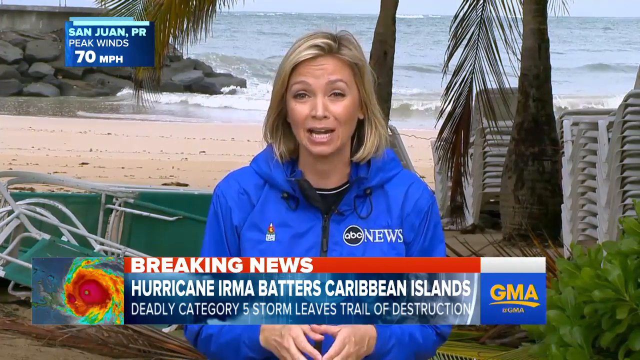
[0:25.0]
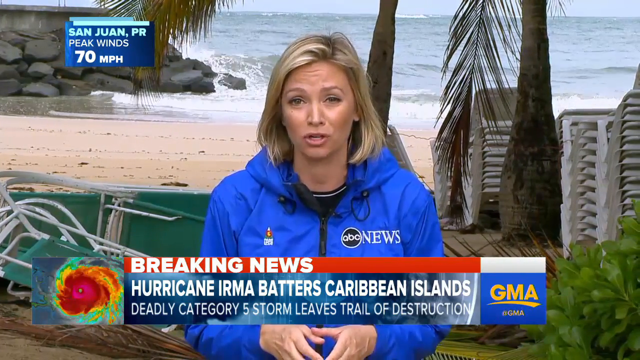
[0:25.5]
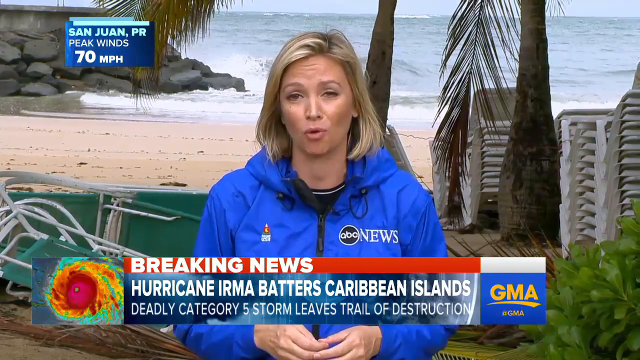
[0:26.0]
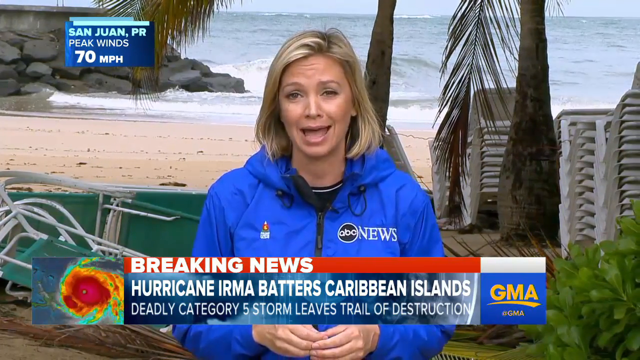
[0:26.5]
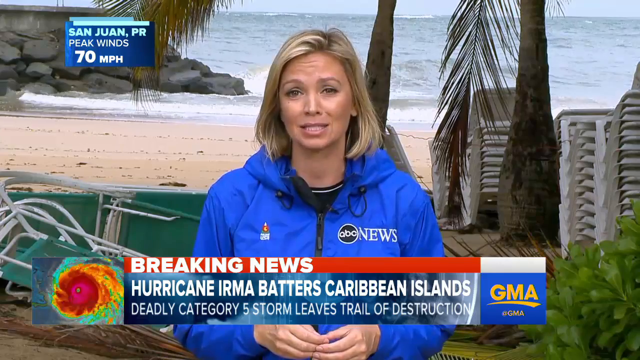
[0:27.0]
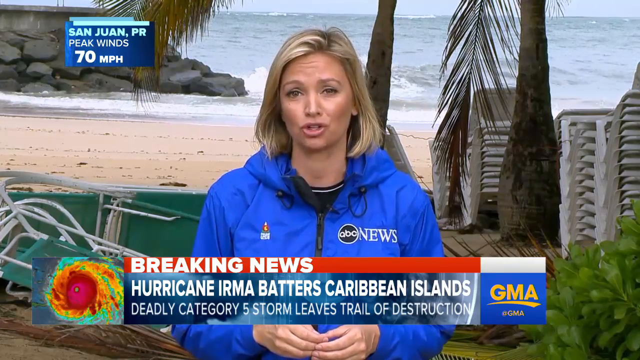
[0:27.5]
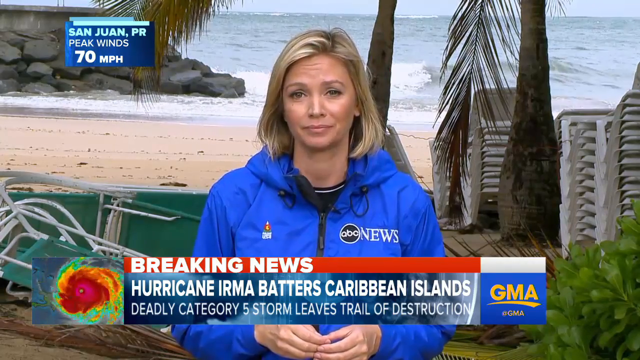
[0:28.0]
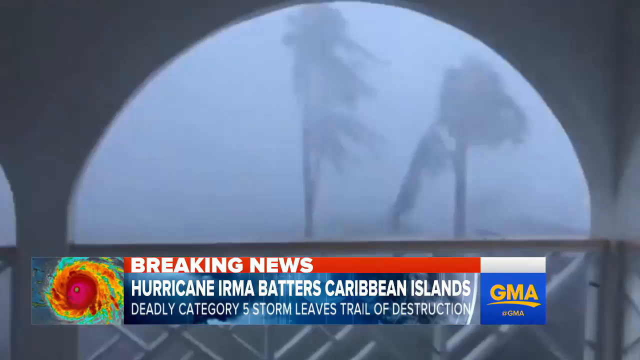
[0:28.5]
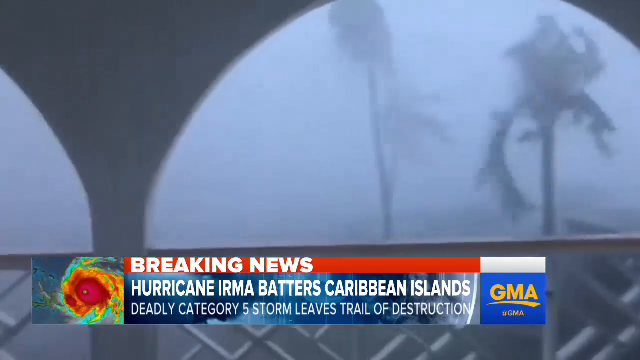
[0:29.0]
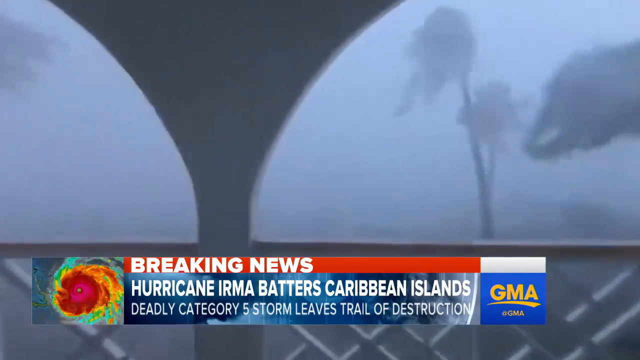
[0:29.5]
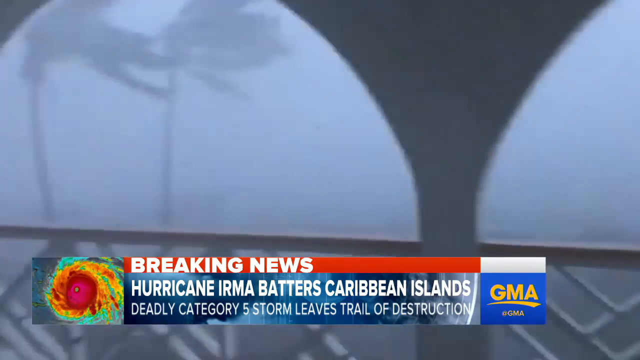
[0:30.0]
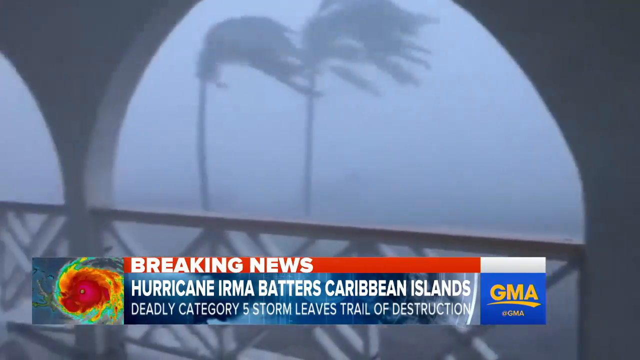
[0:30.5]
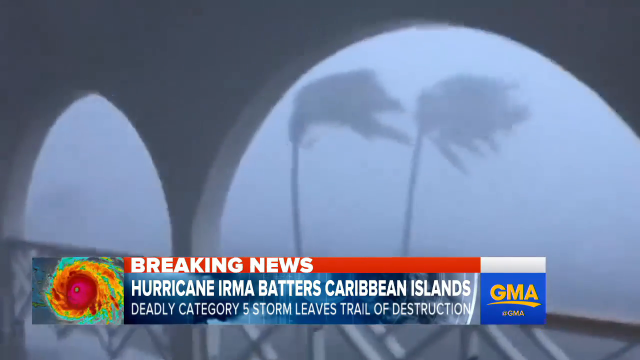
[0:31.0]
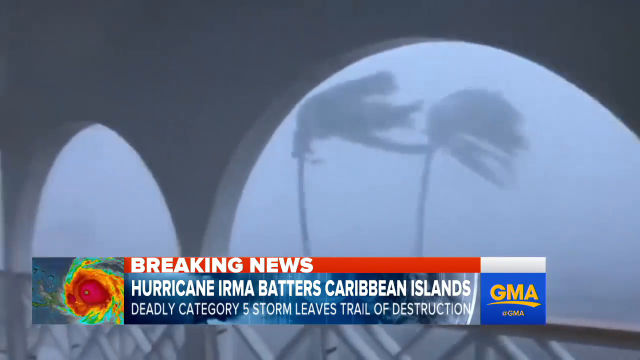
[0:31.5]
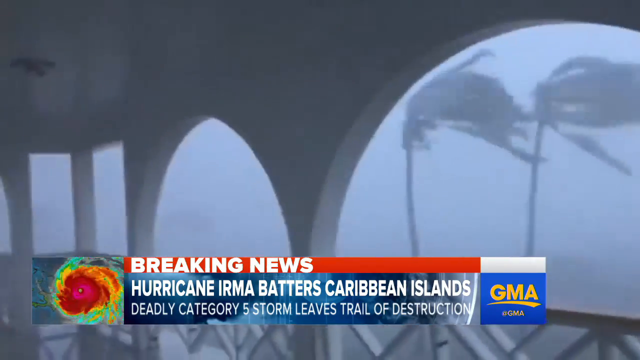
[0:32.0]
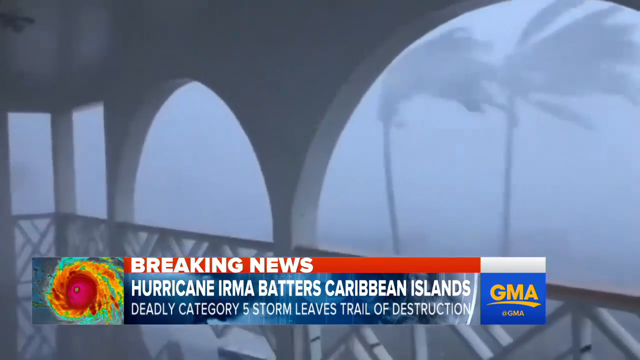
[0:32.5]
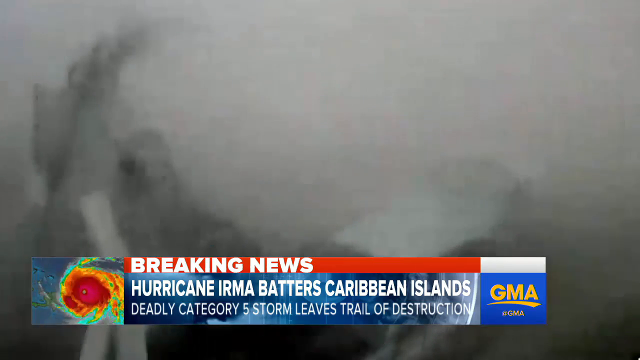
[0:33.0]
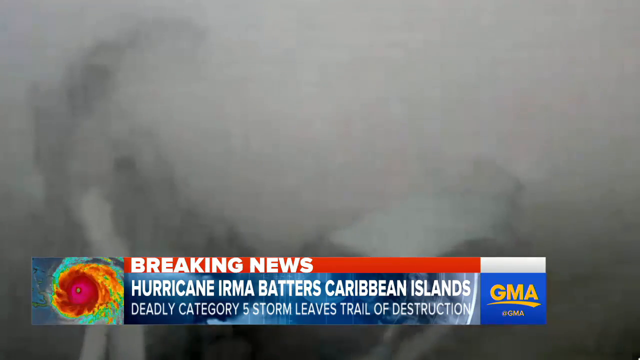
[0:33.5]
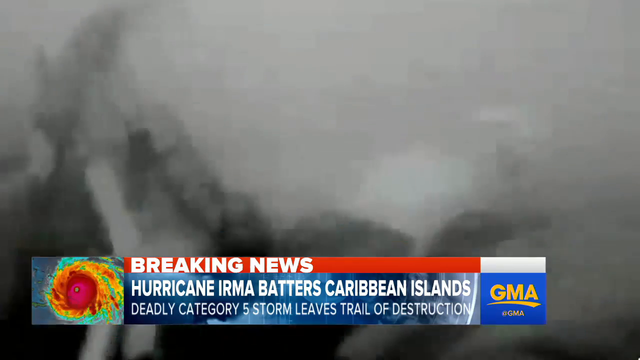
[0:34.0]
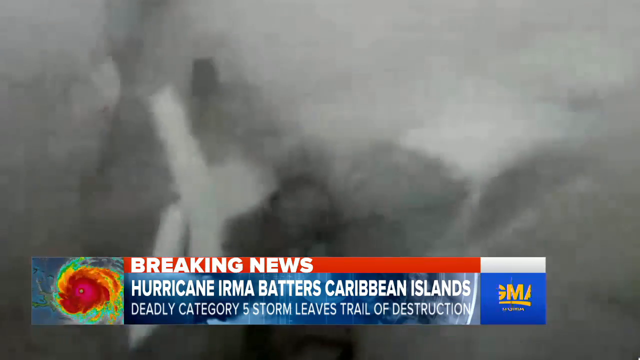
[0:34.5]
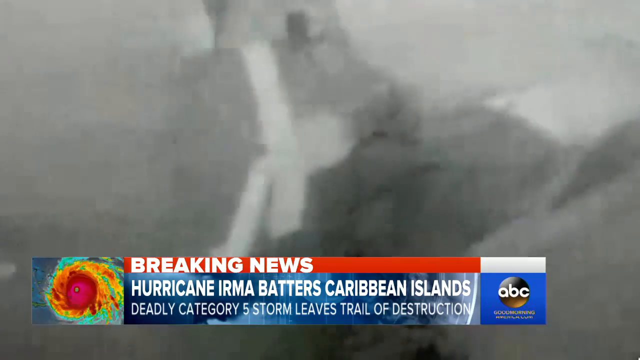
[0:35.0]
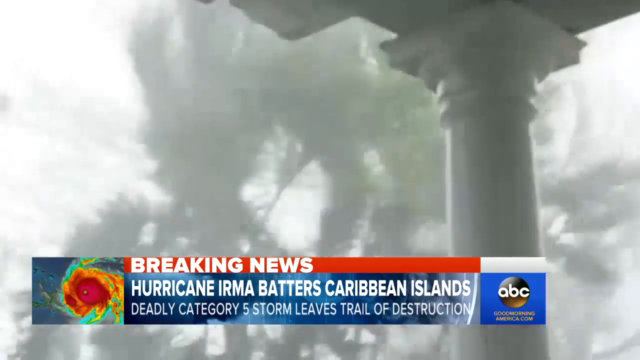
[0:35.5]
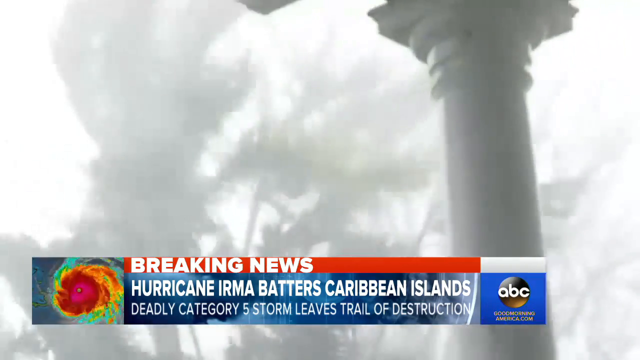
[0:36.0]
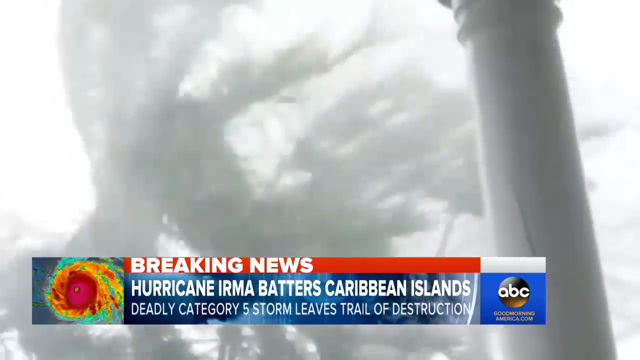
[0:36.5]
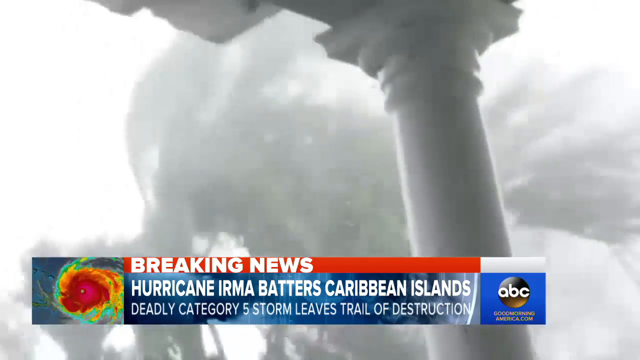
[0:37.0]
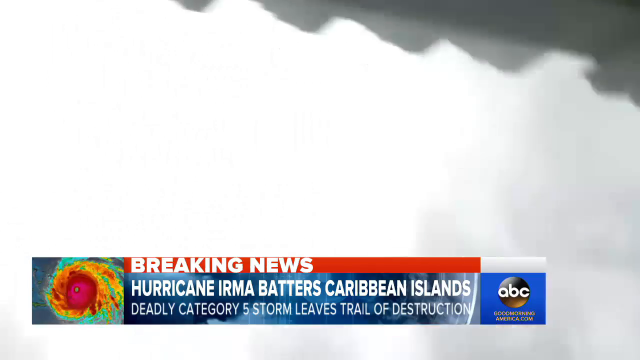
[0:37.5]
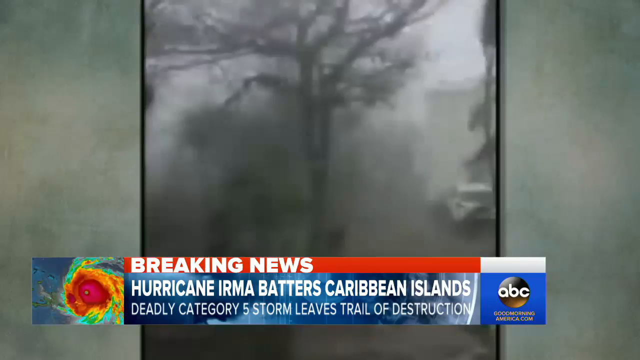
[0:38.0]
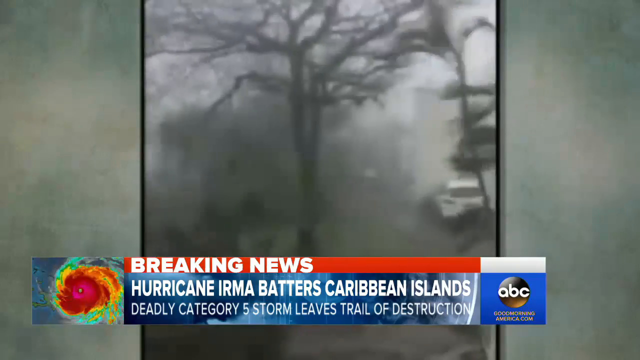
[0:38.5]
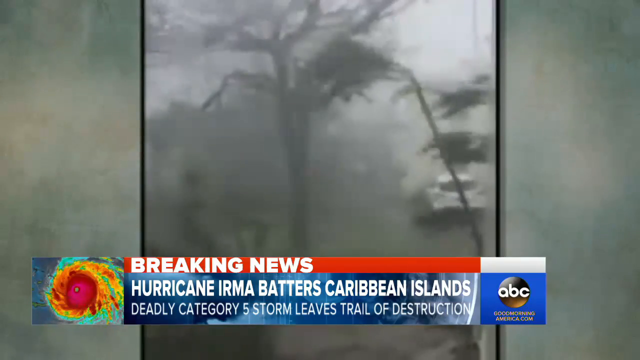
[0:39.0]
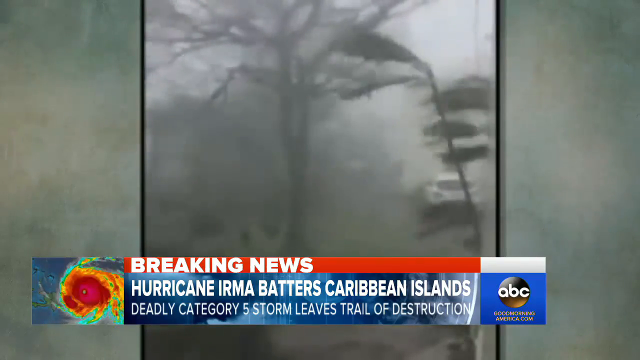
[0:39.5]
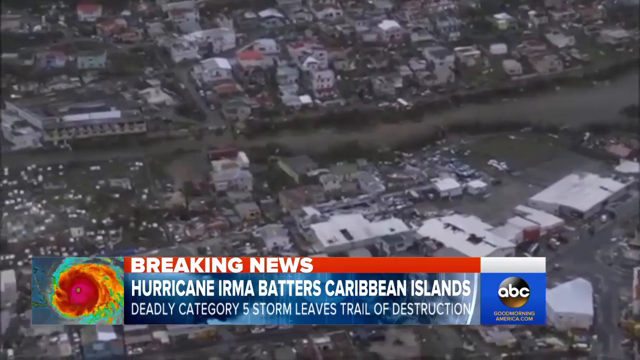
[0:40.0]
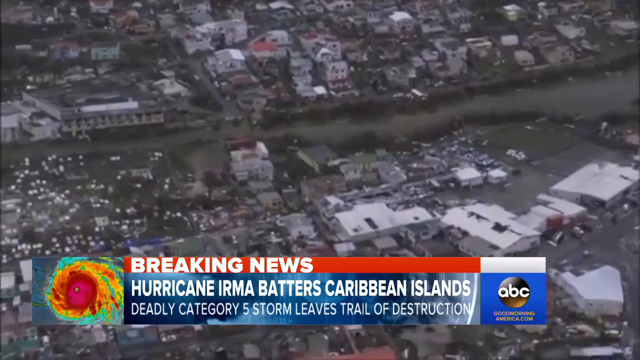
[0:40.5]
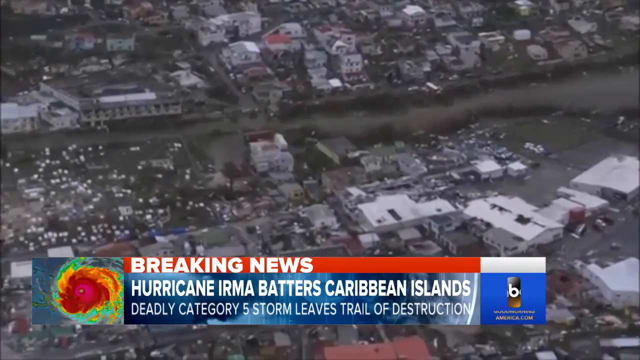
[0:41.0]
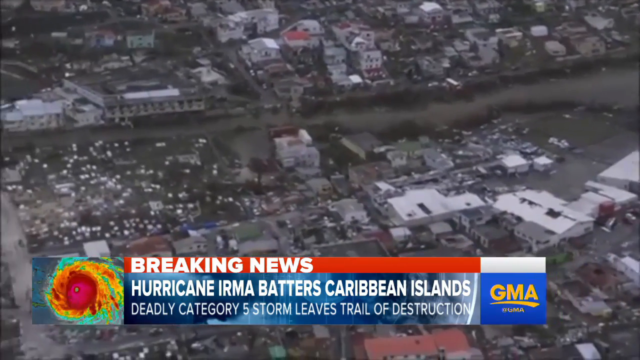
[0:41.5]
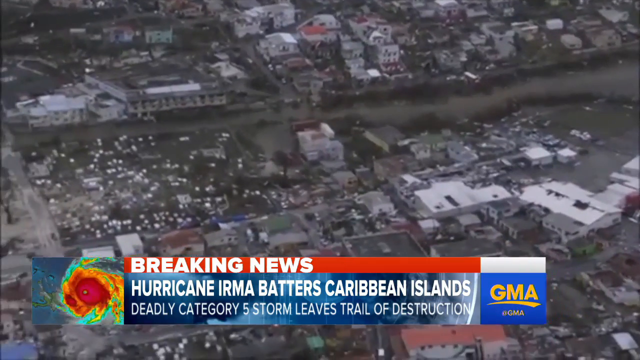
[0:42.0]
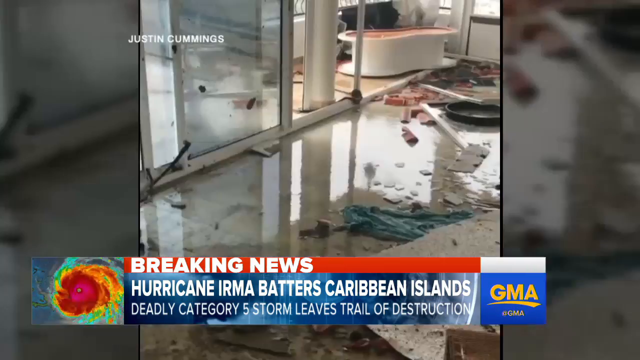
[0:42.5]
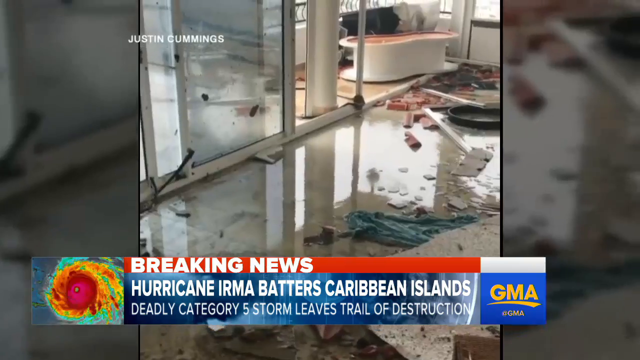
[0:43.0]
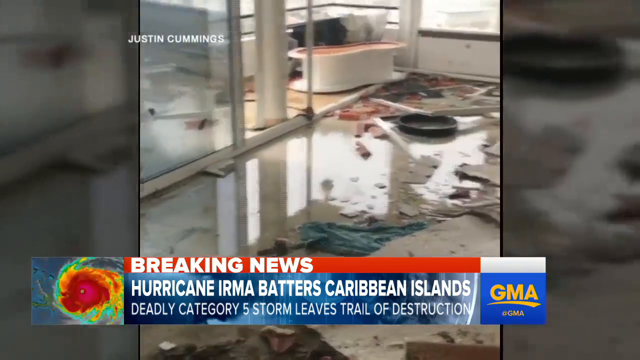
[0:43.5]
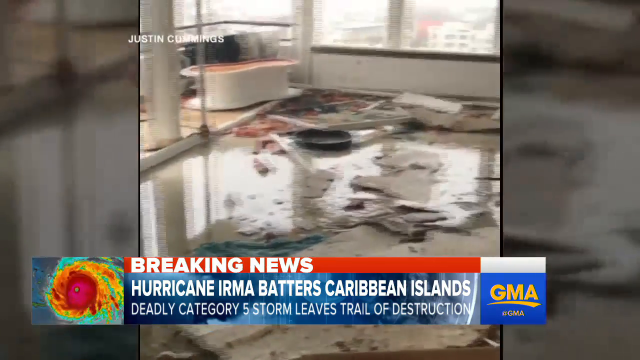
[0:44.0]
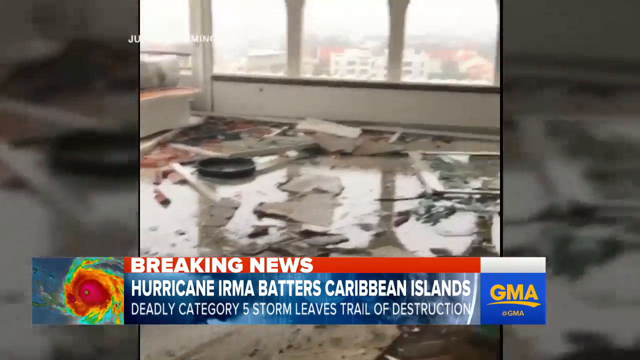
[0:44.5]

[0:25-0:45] Footage of Hurricane Irma, possibly in Puerto Rico, shows a newscaster in a bright blue jacket standing on a beach on location. Other footage shows massive amounts of wind blowing palm trees and trees all around, with the trees having a hard time keeping their ground in the extremely intense winds. There looks to be massive amounts of water and flooding all over the place, many vehicles and building debris appear piled up, and there appears to be a lot of heavy rain. Some of the footage is not very clear because there is so much rain that details cannot be seen. Where the woman stands, the beach appears somewhat calm, and her footage may have been filmed before the storm.